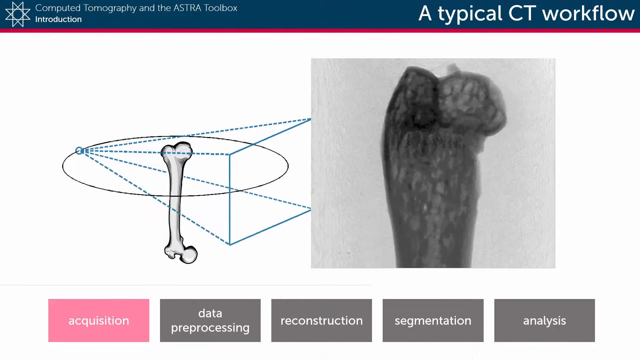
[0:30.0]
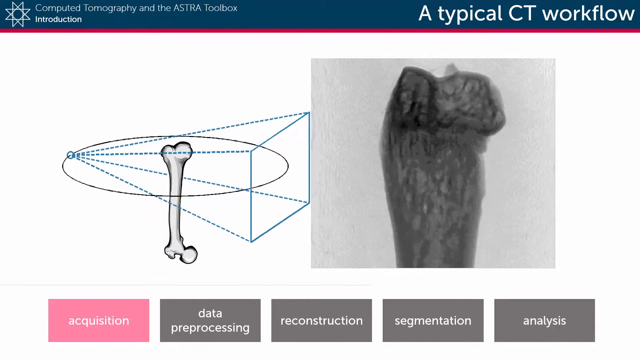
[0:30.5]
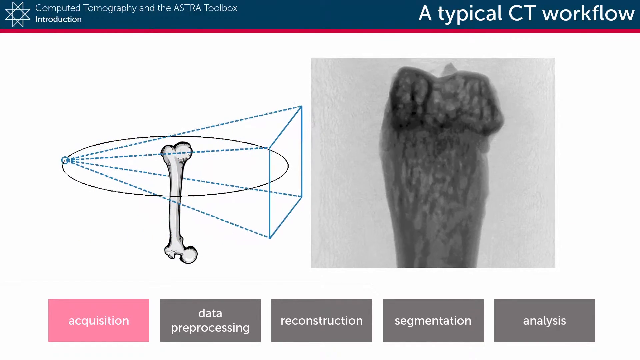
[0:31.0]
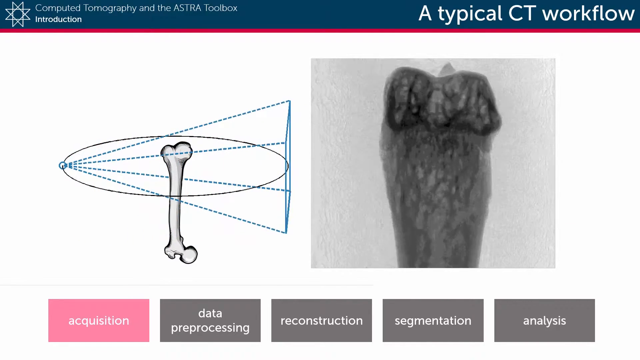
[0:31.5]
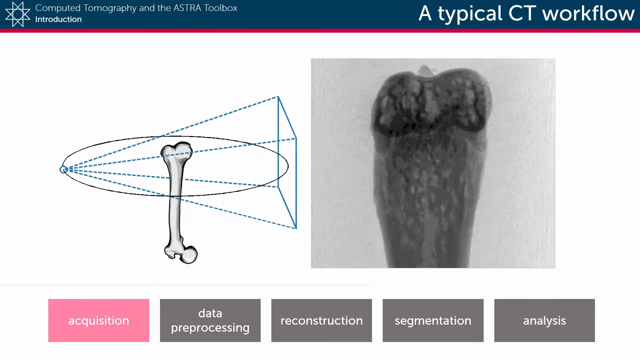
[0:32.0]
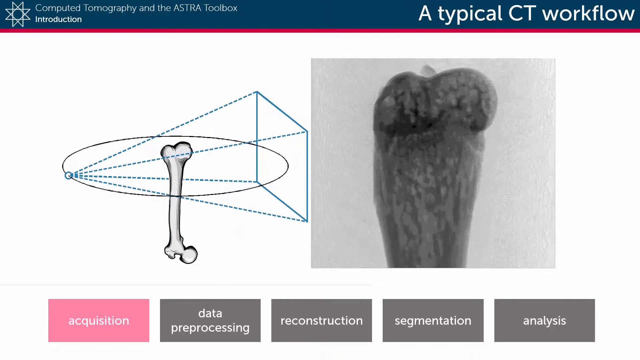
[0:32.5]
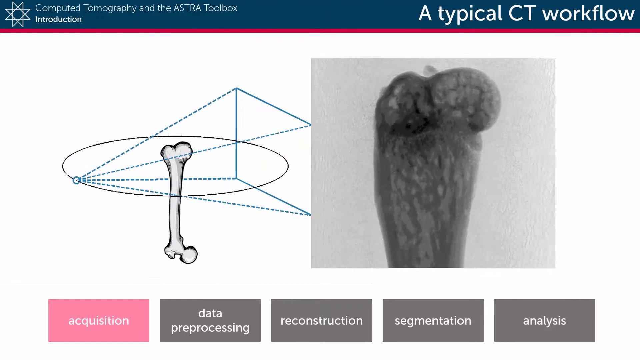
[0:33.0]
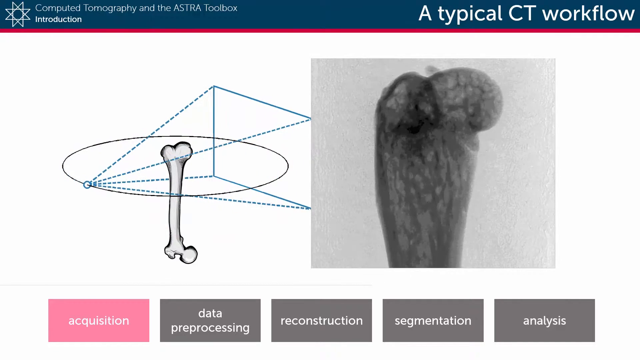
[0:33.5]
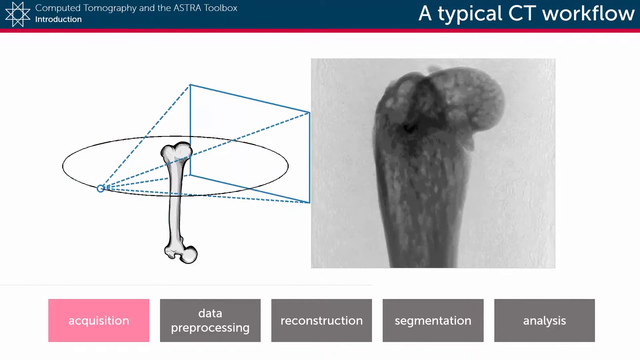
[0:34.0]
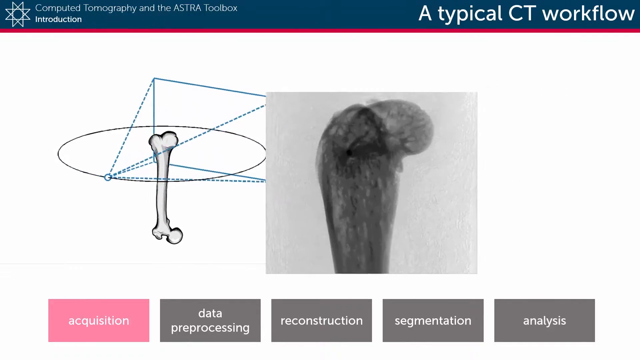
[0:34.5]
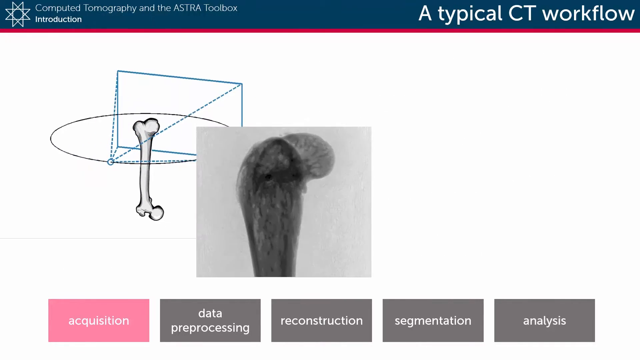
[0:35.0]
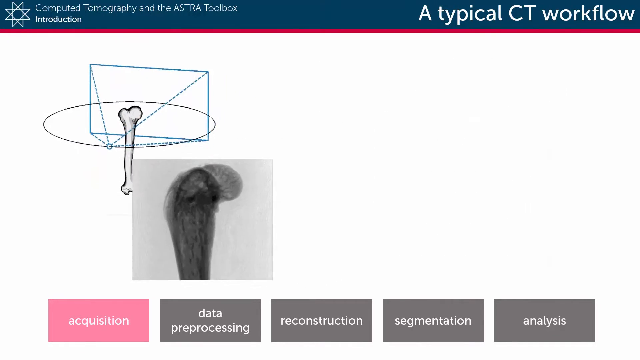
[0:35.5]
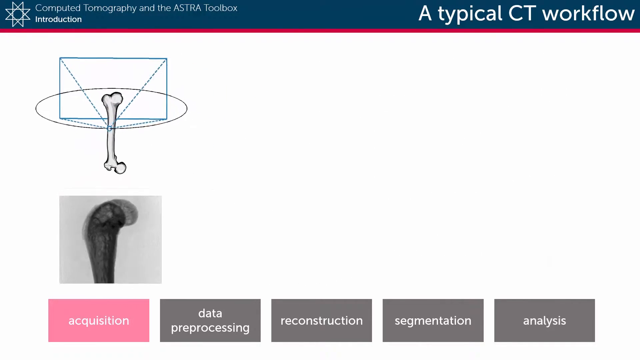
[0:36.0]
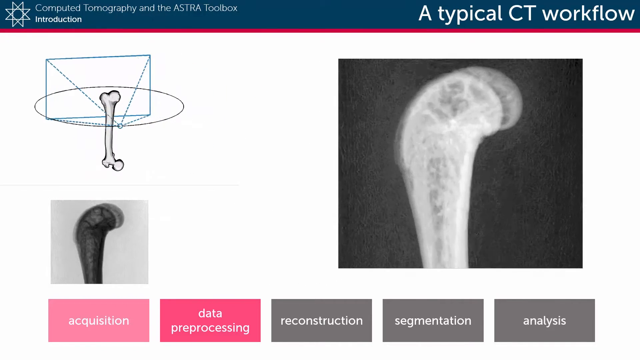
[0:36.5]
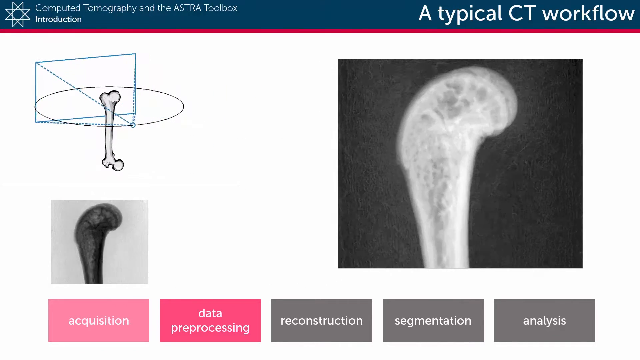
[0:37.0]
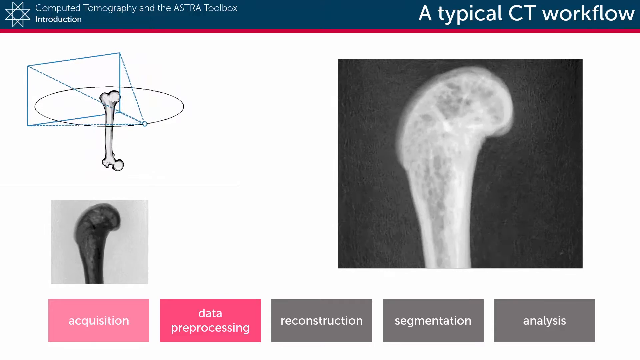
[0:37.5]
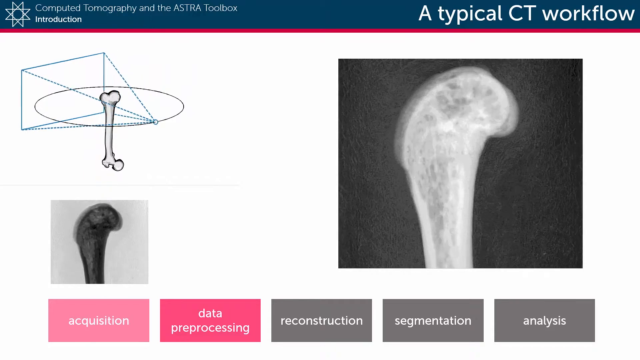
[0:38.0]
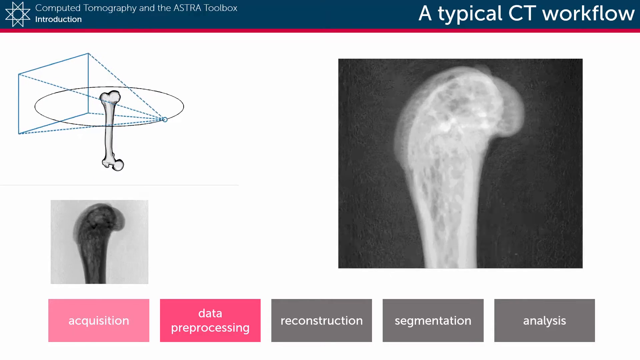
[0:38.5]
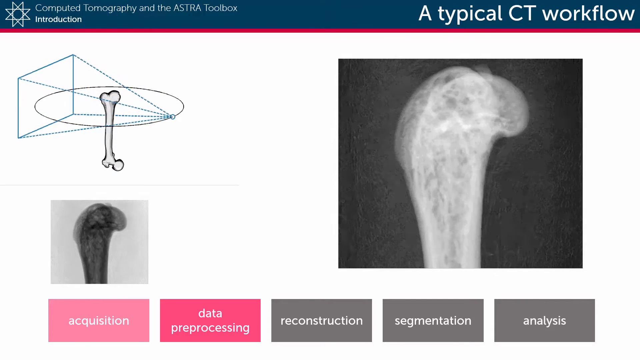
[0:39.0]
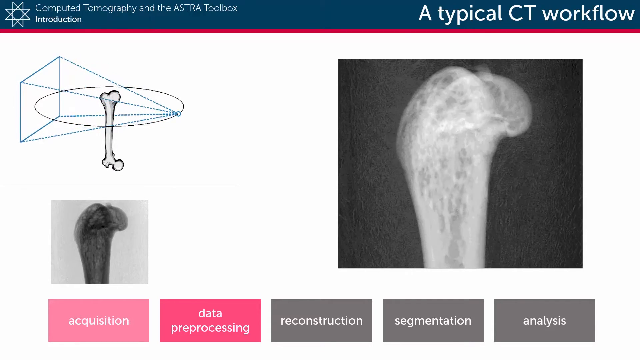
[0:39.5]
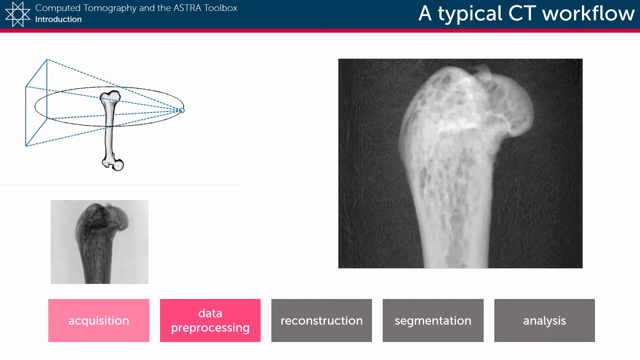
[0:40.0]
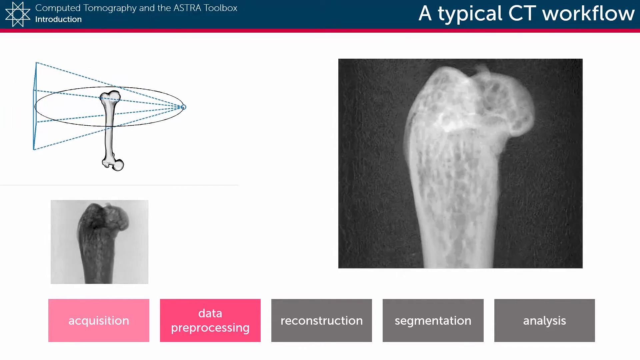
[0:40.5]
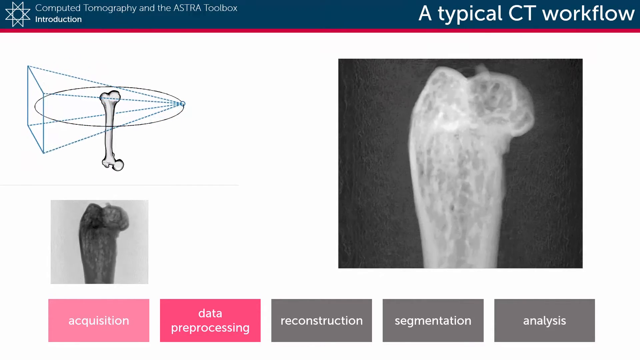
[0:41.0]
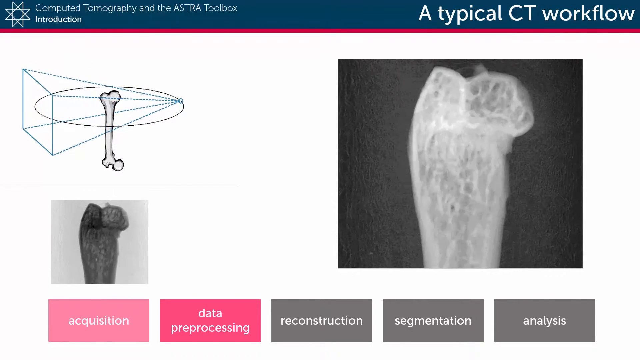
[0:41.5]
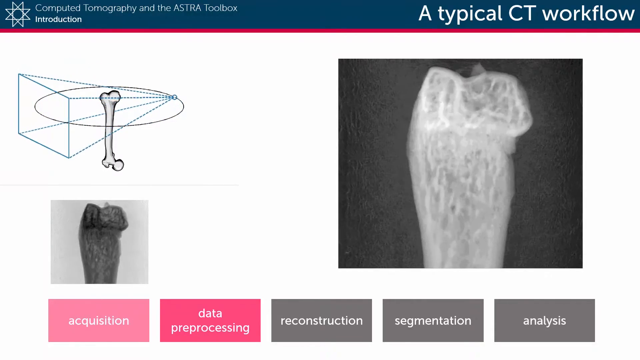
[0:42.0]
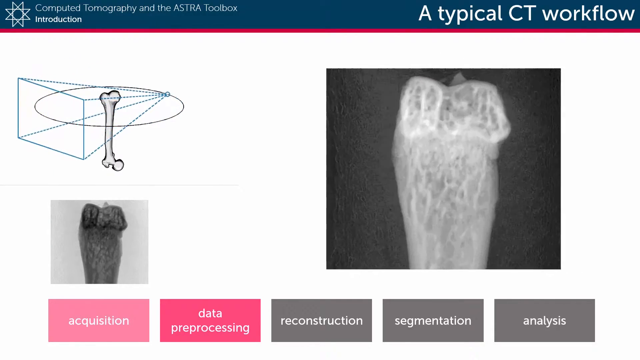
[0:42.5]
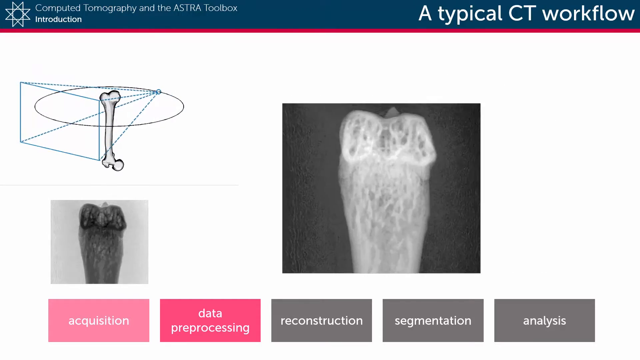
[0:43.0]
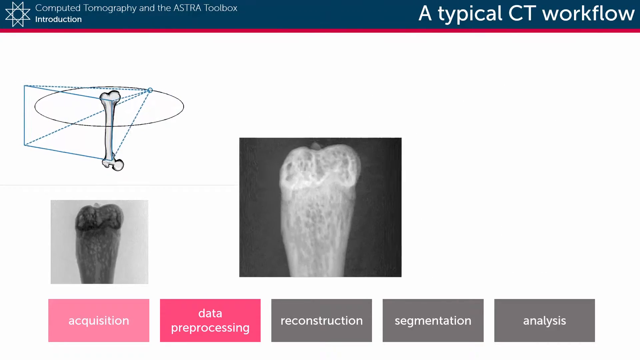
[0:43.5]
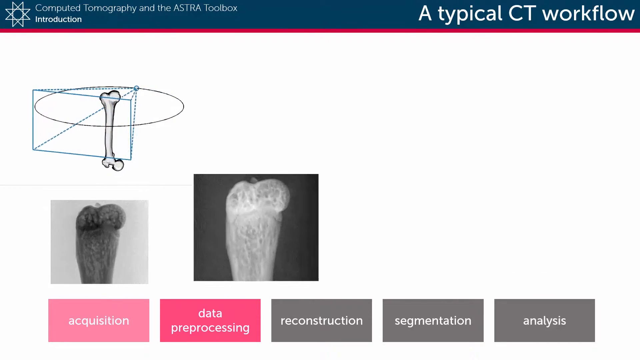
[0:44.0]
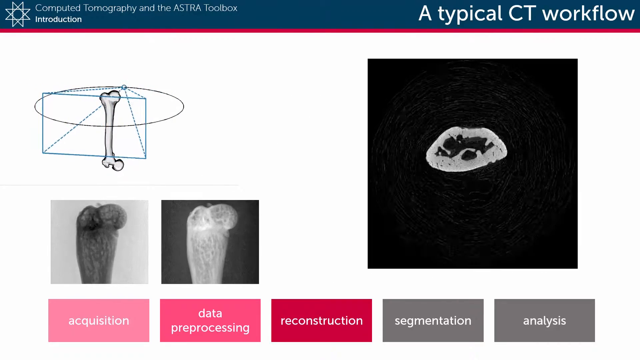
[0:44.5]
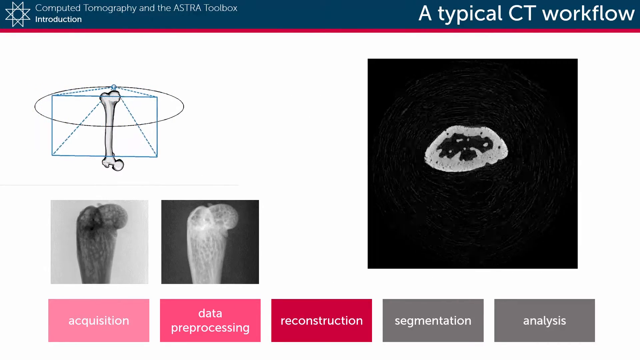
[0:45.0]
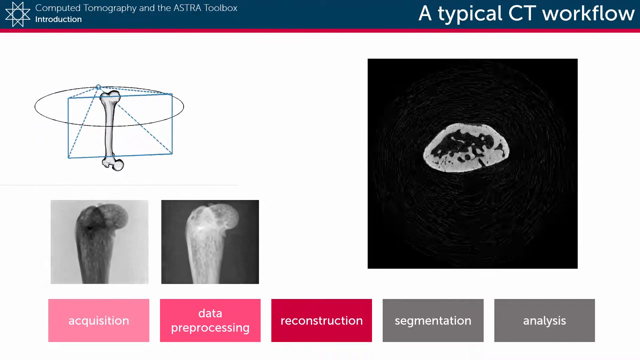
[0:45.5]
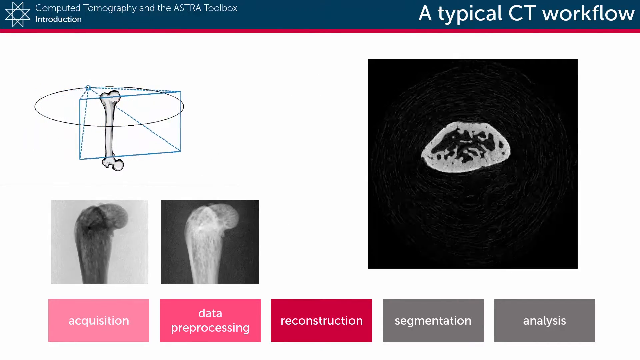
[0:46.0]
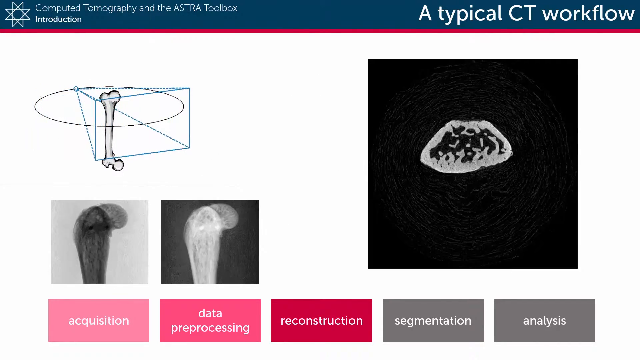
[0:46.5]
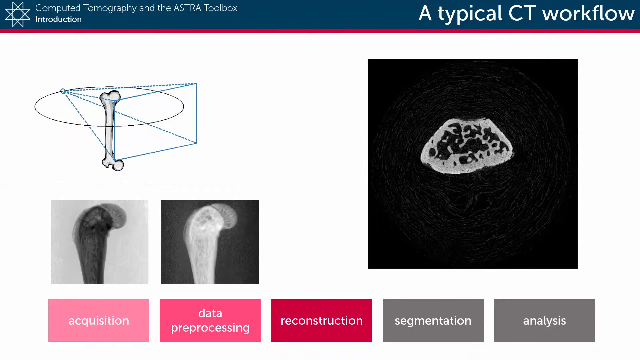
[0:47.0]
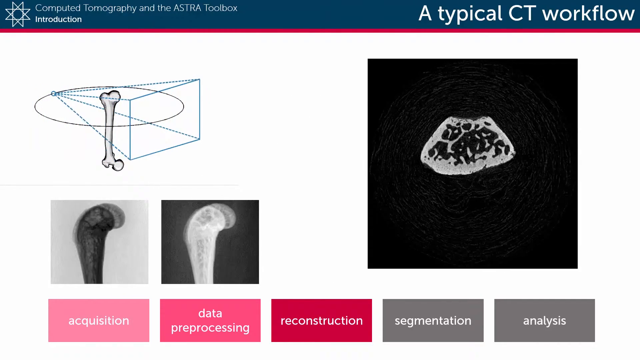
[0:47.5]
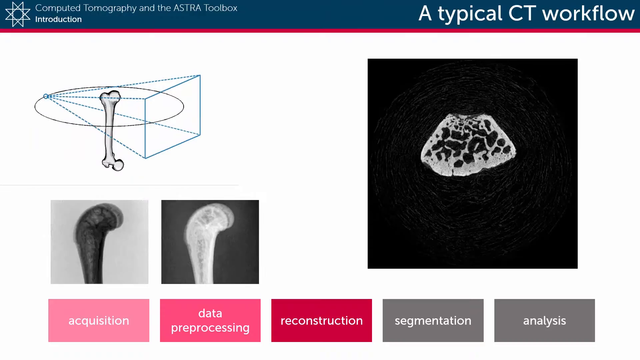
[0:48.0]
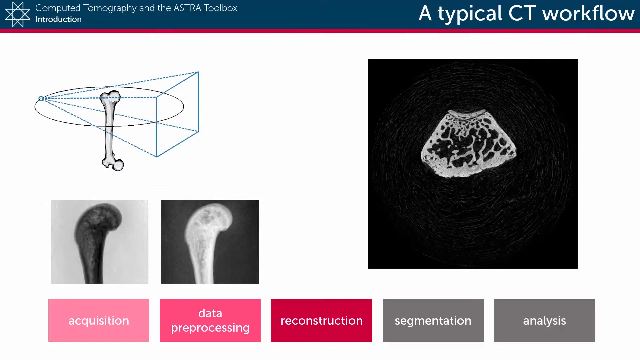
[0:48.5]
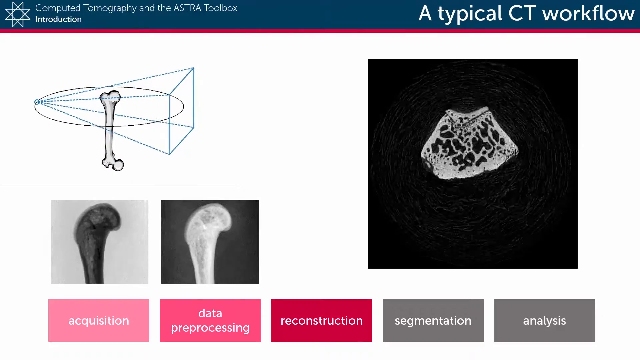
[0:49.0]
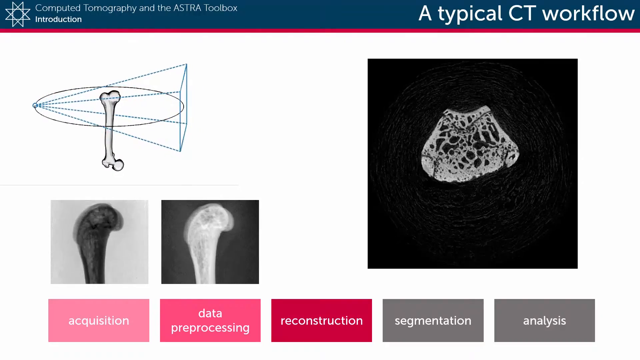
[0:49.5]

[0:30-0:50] The dotted lines come from the circle and spread up and out and down and out, meeting at a rectangle drawn with four solid lines; the dotted lines go to each of its corners. The drawing keeps rotating to the left and down toward the bottom. It then moves up to the top left, and the X-ray that was on the right side moves to the bottom left; it has a gray background and the bone is black. A new image appears with a black background and a bone that looks white with a little gray in it. As the drawing in the top left continues to rotate, the image on the right rotates, as does the one in the bottom left. That image then moves down to the left beside the other one. Next there is a black background with what looks like a white blob in the center with black in its middle, almost like a rock; the black middle is probably the joint. It seems to pulsate, moving out and getting bigger as the black grows. The drawing in the top left keeps going in a counterclockwise circle.